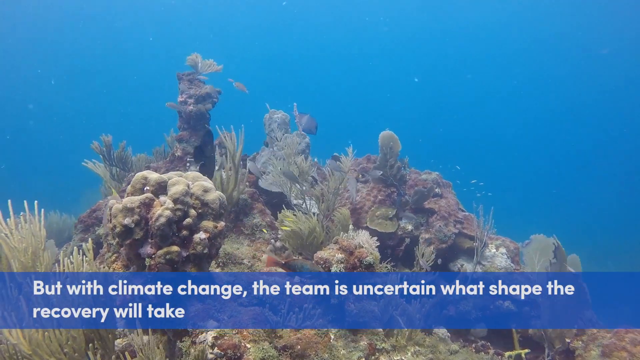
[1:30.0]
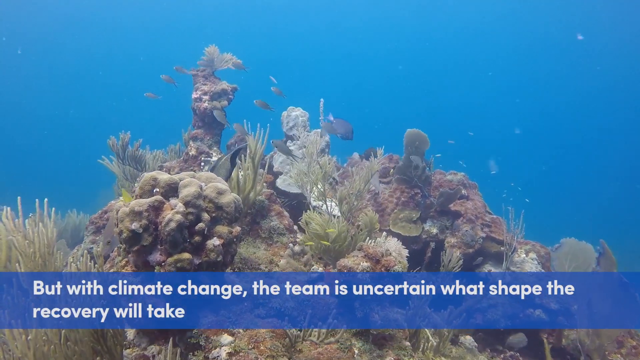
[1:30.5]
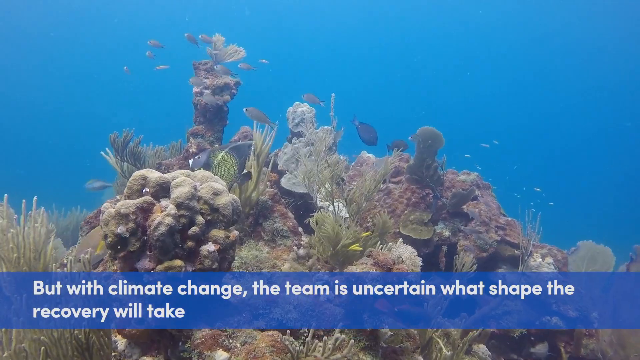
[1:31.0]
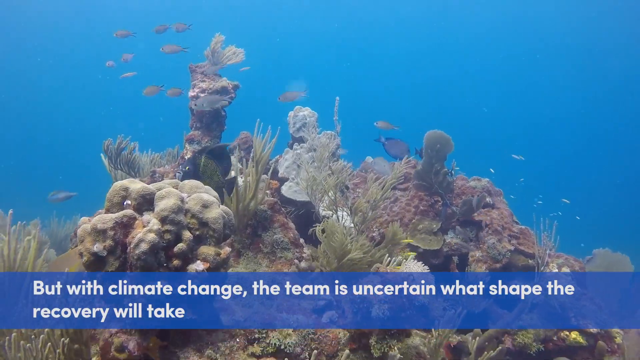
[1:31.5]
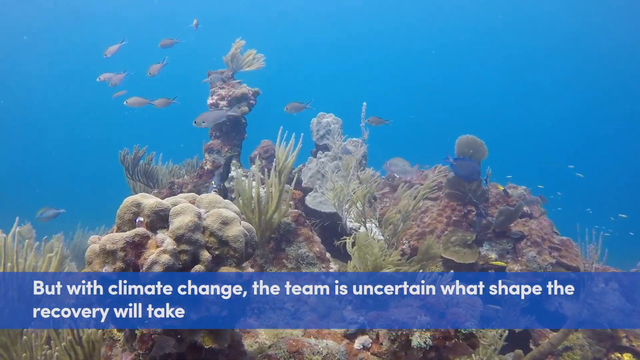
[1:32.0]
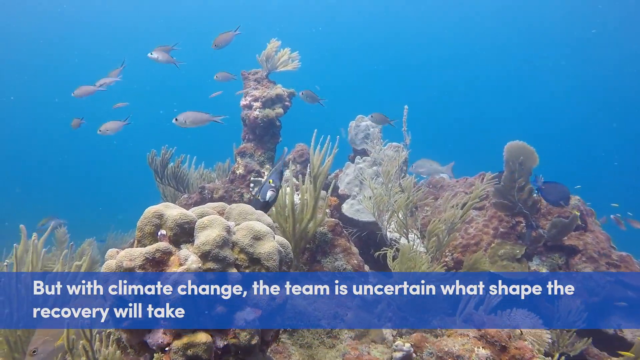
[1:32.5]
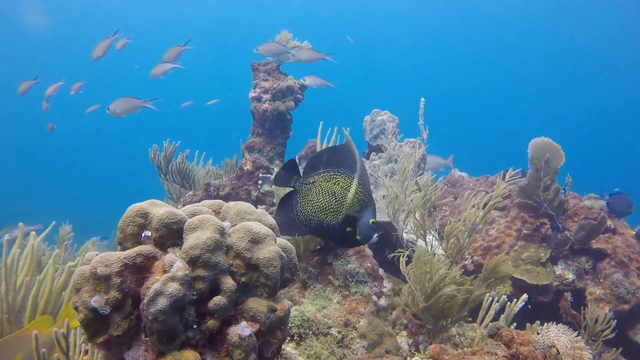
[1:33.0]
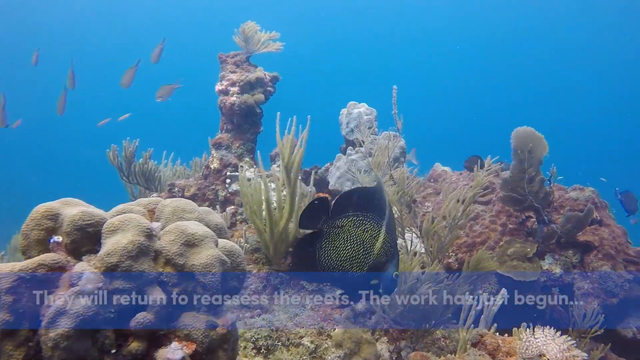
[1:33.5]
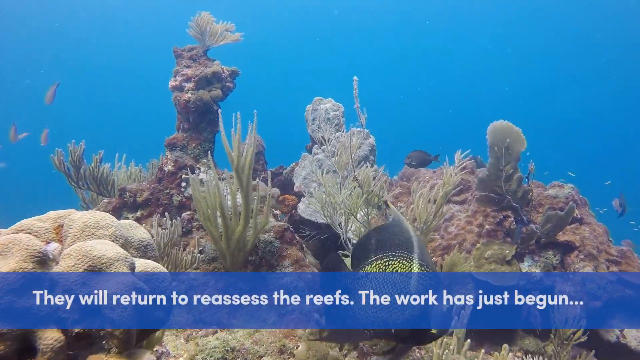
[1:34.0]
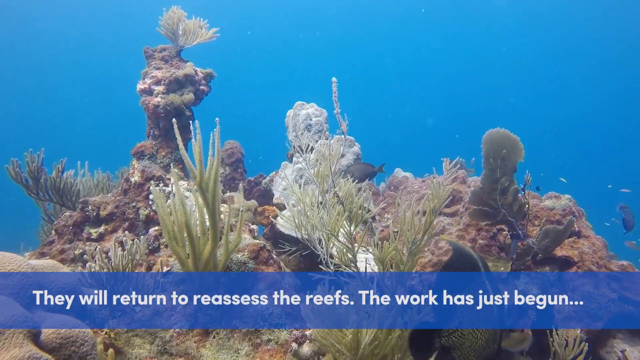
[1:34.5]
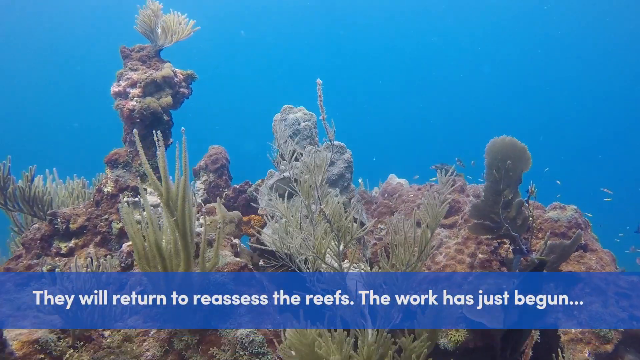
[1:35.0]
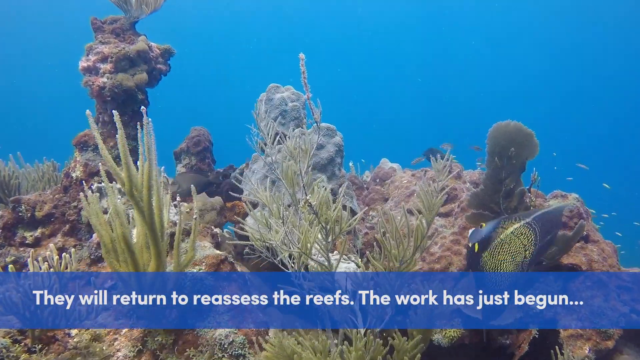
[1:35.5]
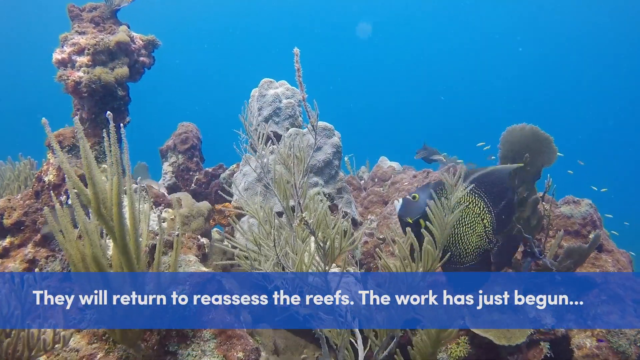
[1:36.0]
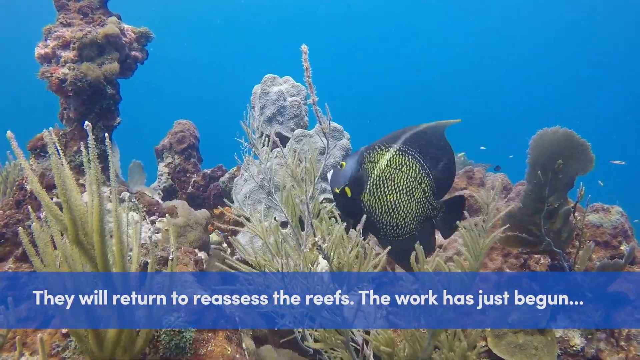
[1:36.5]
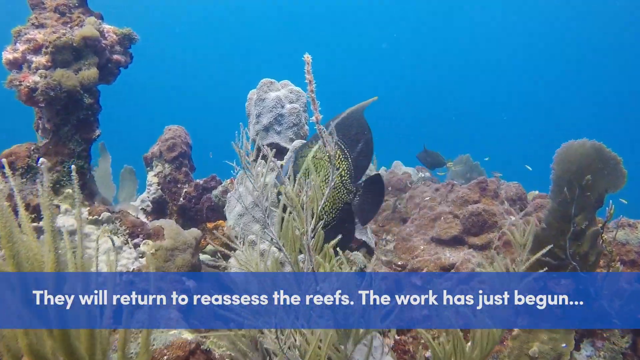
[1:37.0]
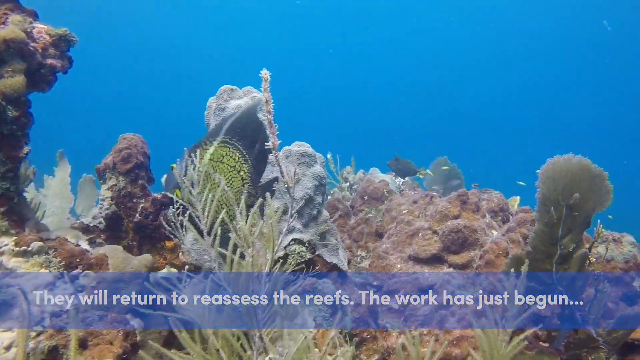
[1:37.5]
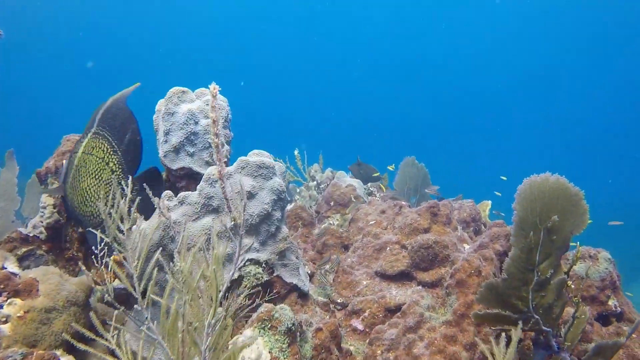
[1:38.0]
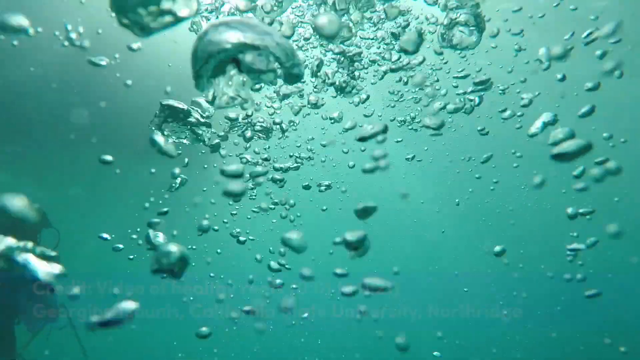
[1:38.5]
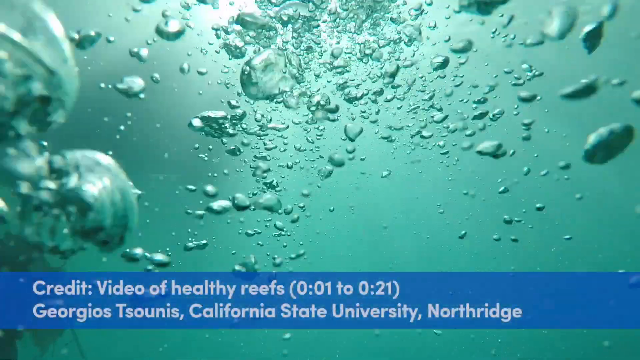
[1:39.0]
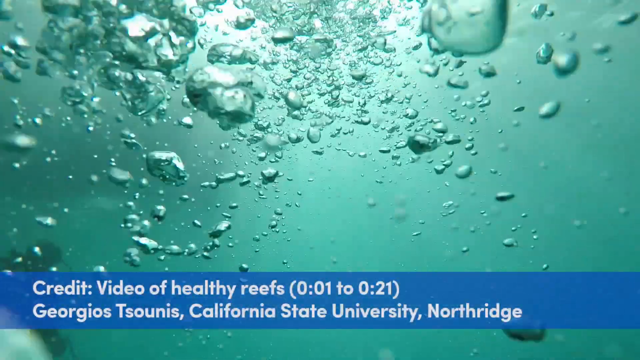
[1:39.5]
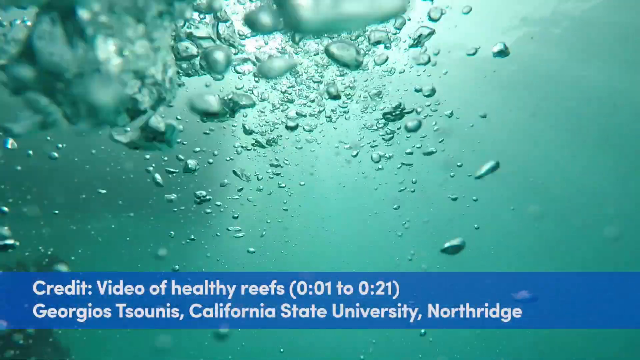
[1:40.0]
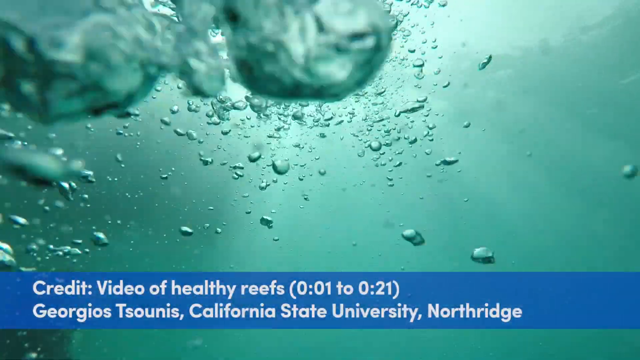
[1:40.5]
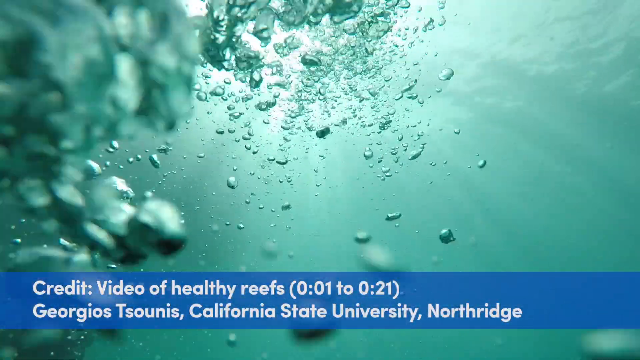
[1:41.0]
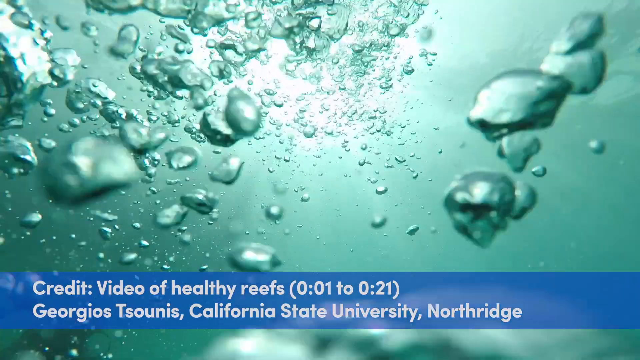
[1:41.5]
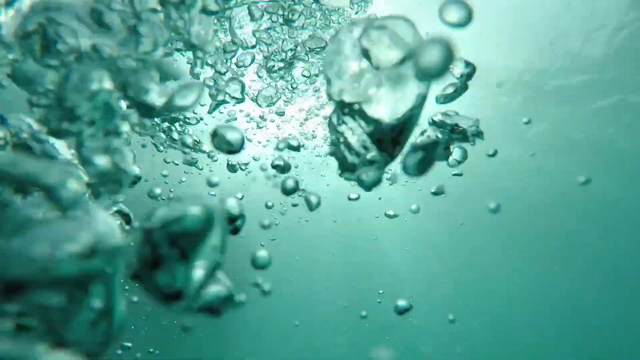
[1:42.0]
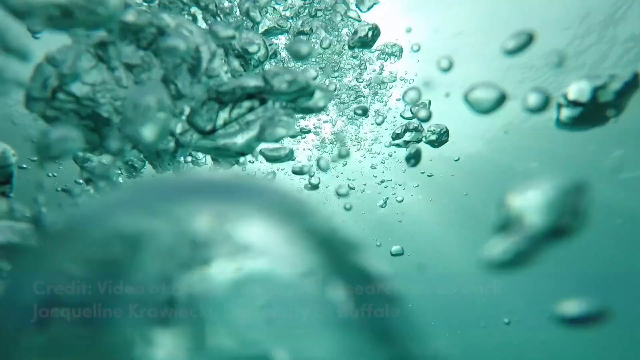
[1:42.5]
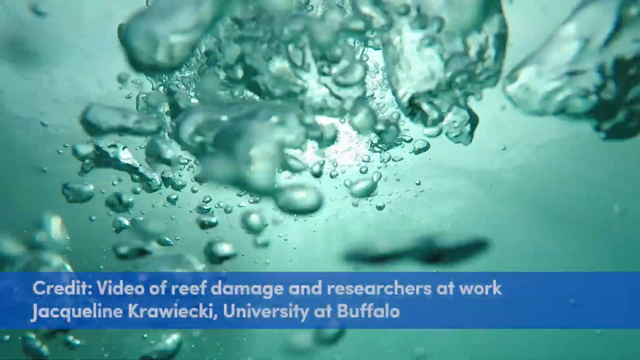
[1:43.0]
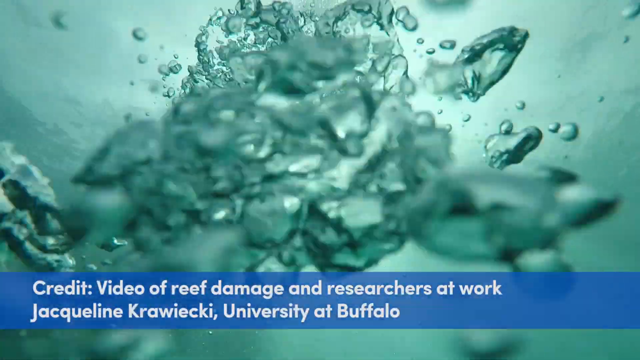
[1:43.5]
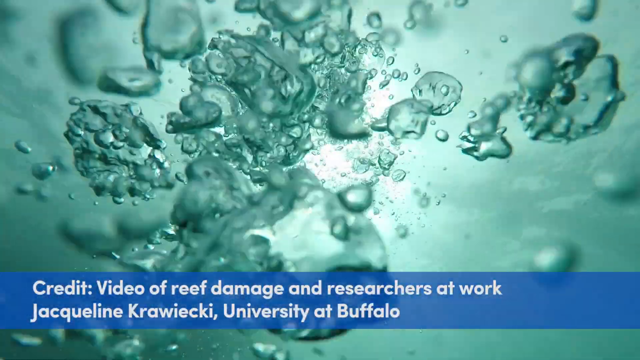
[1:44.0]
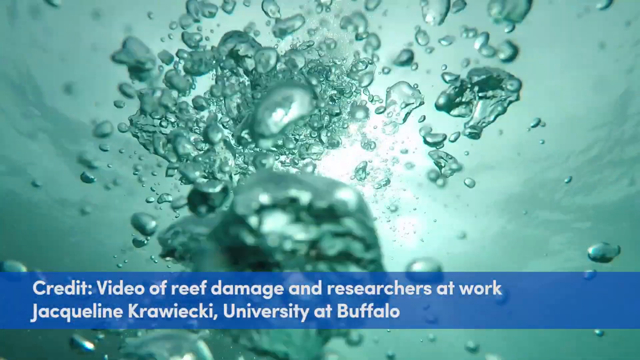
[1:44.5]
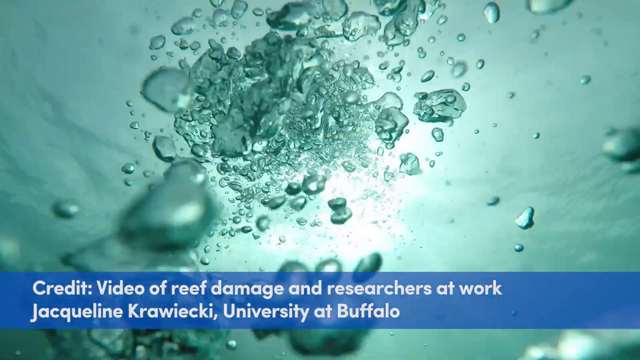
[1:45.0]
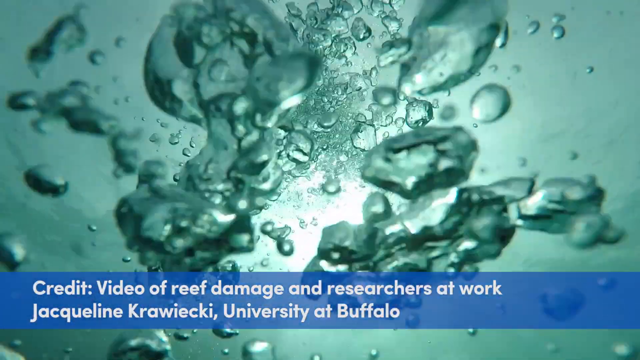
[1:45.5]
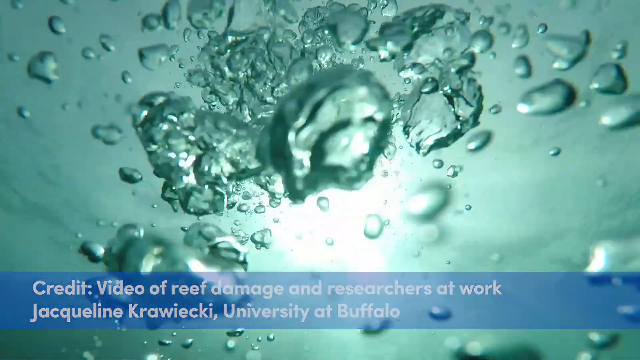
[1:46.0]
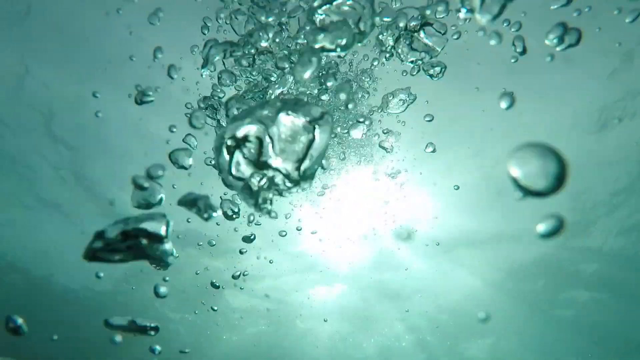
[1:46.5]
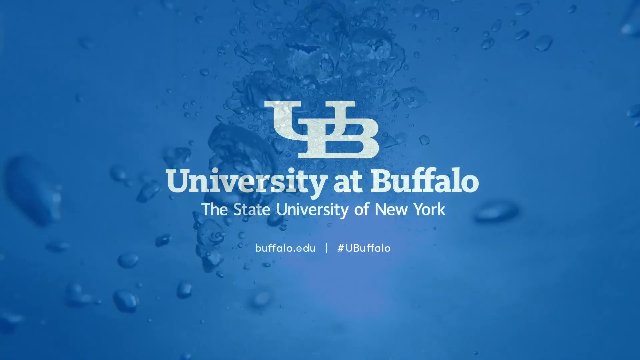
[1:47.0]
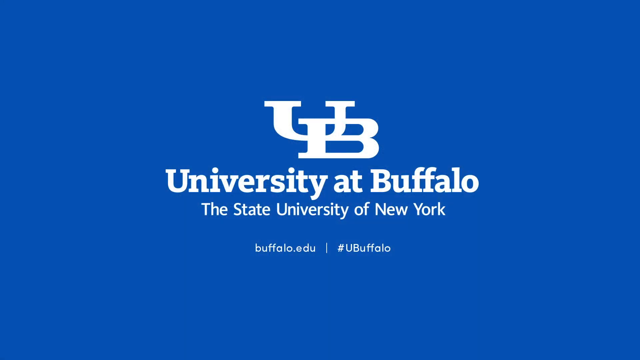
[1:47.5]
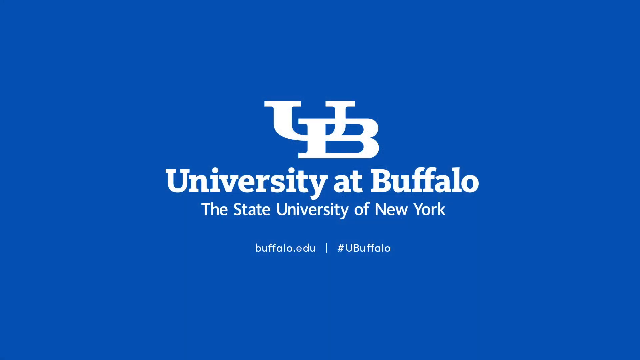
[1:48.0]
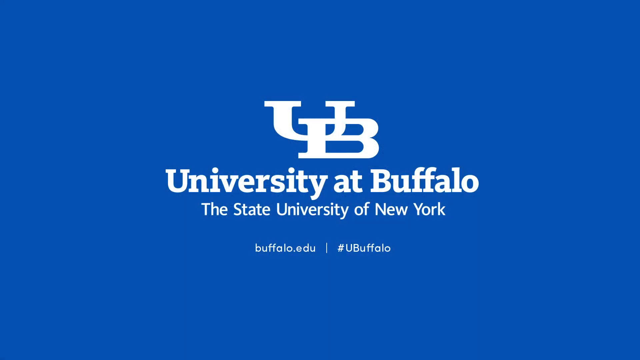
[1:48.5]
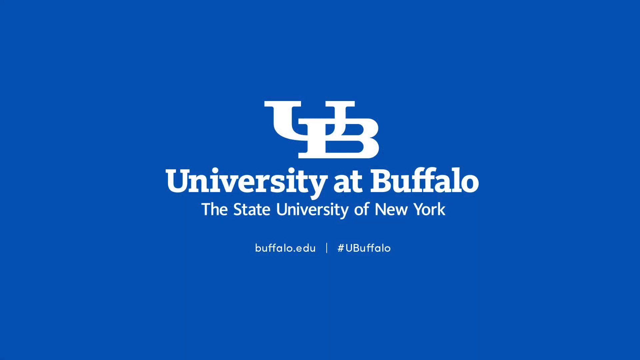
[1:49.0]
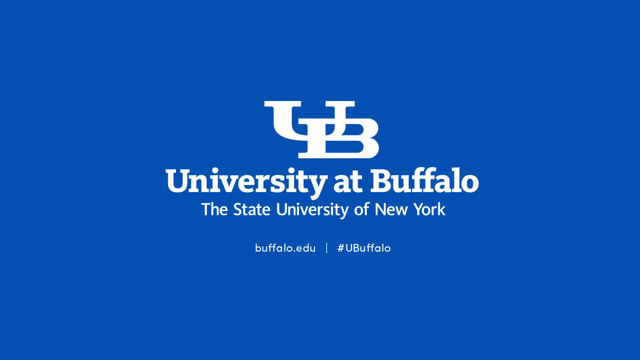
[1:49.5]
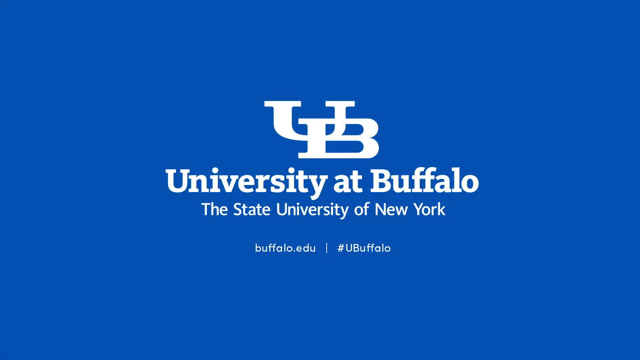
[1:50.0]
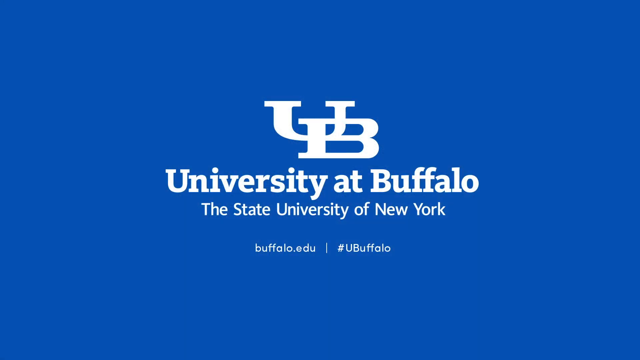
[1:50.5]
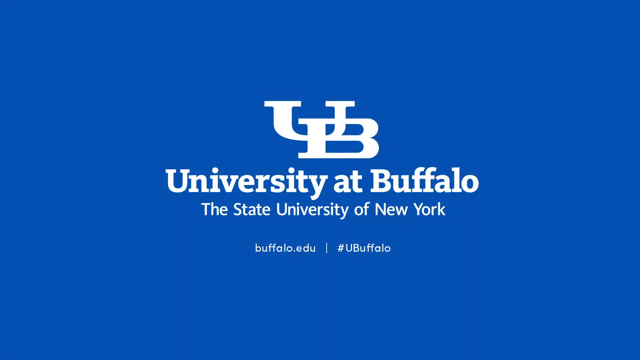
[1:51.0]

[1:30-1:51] A blue rectangle at the bottom carries the text "but with climate change the team is uncertain what shape the recovery will take". Another text reads "they will return to re-assess the reefs, the work has just begun". Credits follow, mentioning a video of healthy reefs, "California State University Northridge", and a video of reef damage and research at work from the University of Buffalo, then "University of Buffalo, State University of New York, buffalo.edu". Behind all of this text, pictures show a heavily damaged coral reef. Little fishes in colors such as black and blue appear, tropical fishes, and bubbles rise to the surface as the video ends.